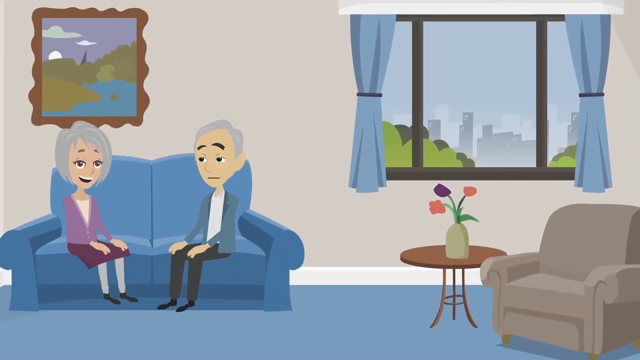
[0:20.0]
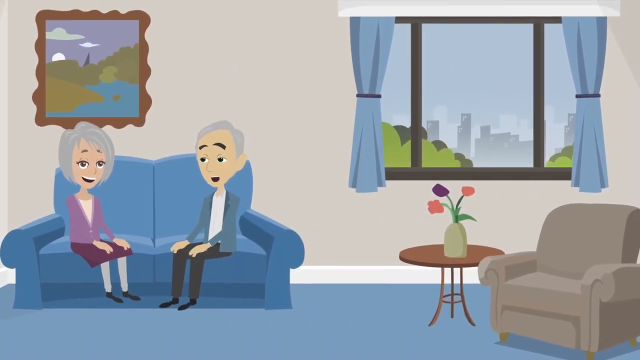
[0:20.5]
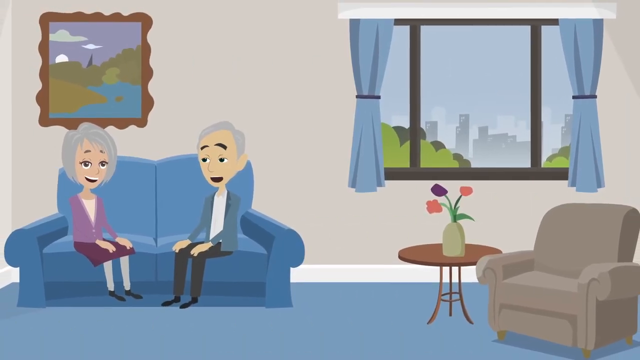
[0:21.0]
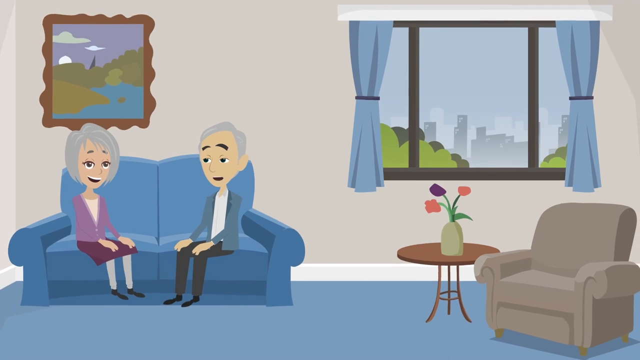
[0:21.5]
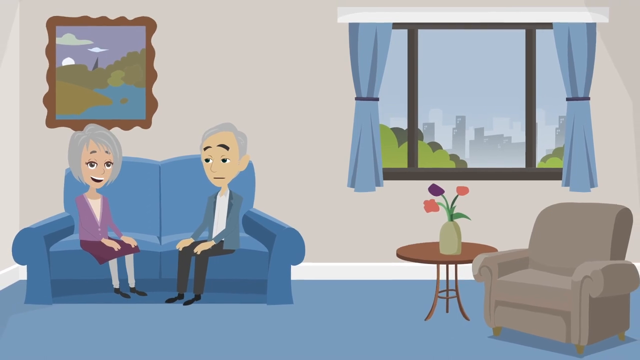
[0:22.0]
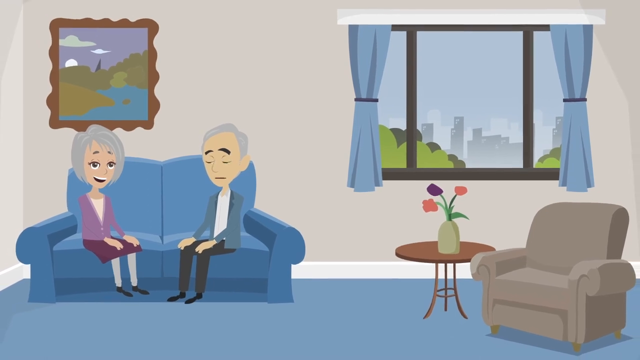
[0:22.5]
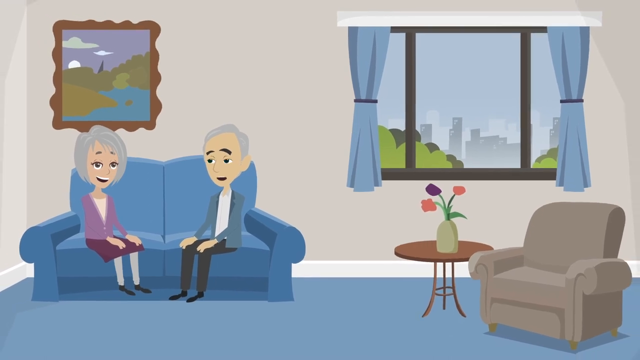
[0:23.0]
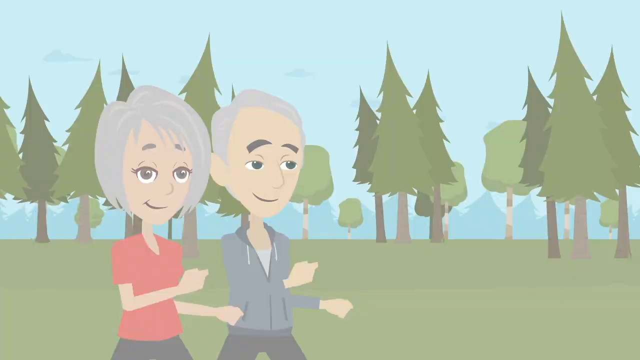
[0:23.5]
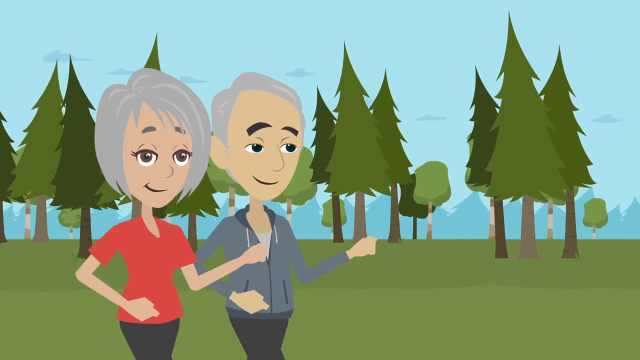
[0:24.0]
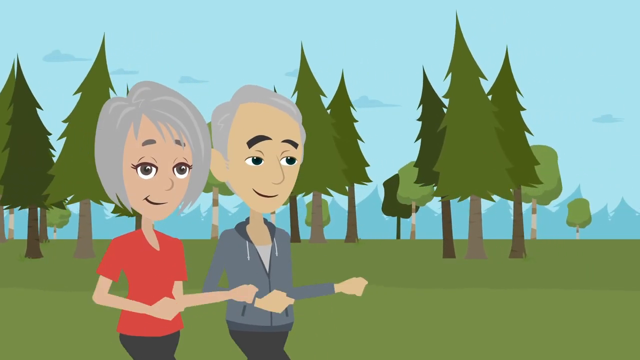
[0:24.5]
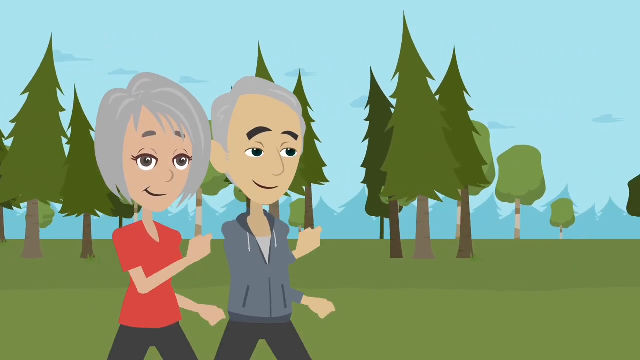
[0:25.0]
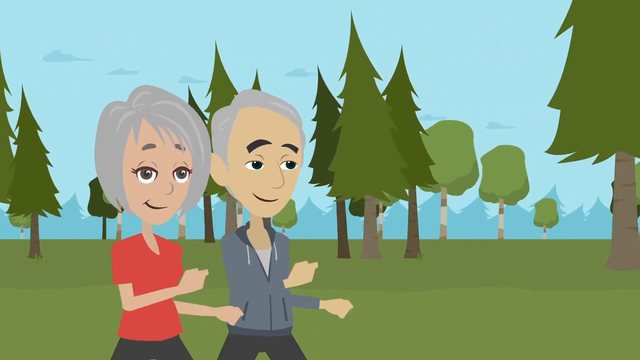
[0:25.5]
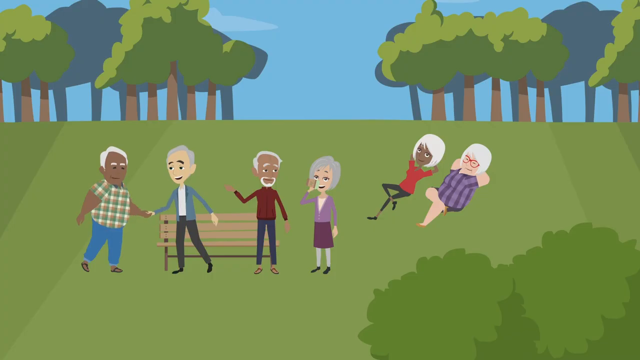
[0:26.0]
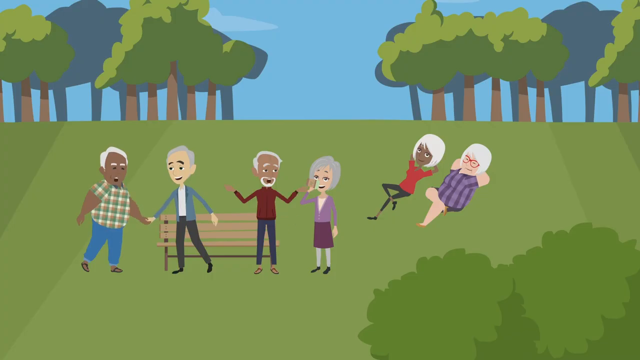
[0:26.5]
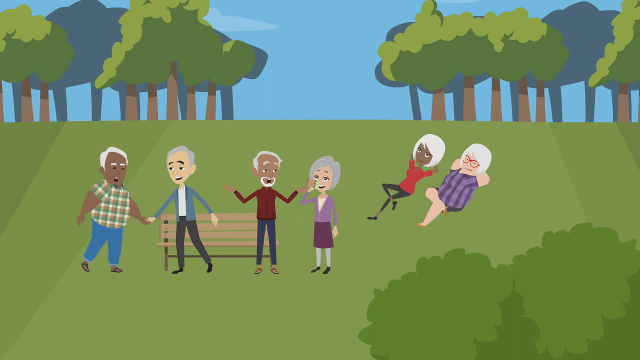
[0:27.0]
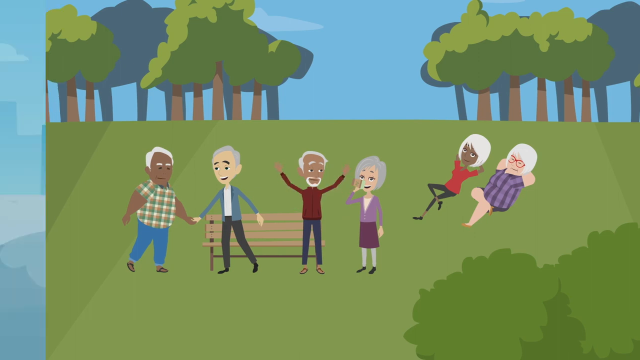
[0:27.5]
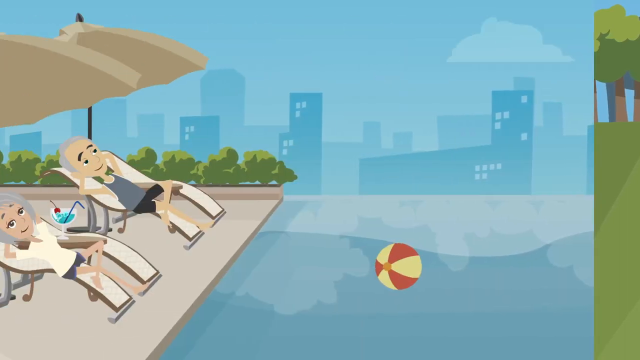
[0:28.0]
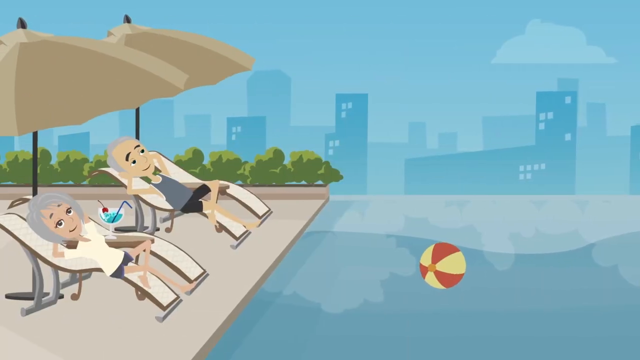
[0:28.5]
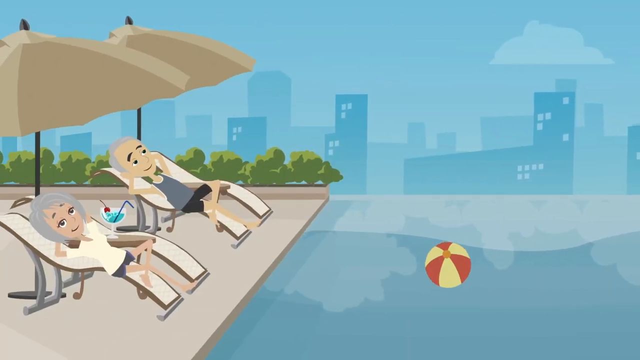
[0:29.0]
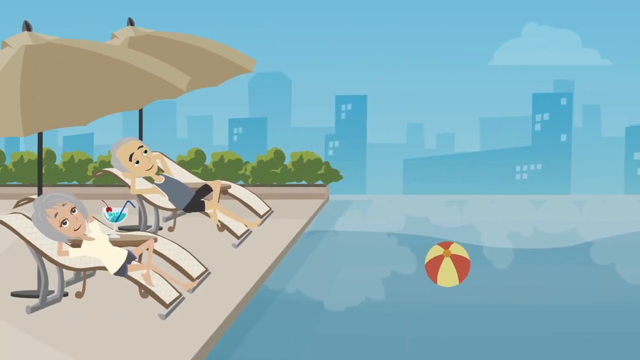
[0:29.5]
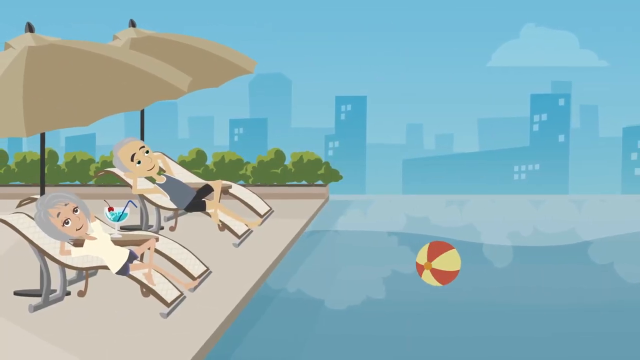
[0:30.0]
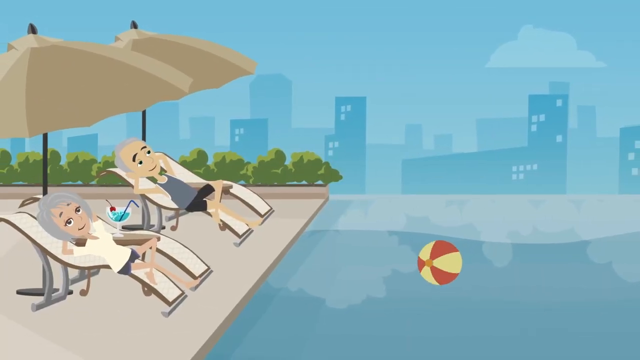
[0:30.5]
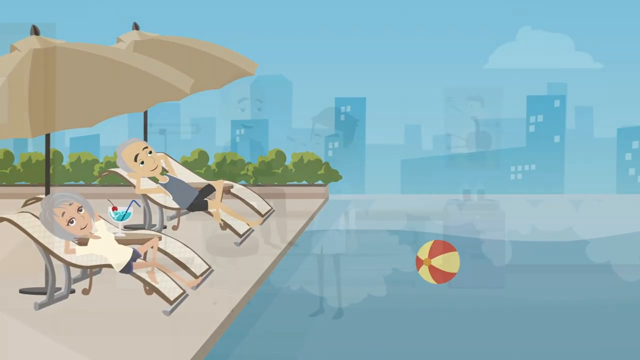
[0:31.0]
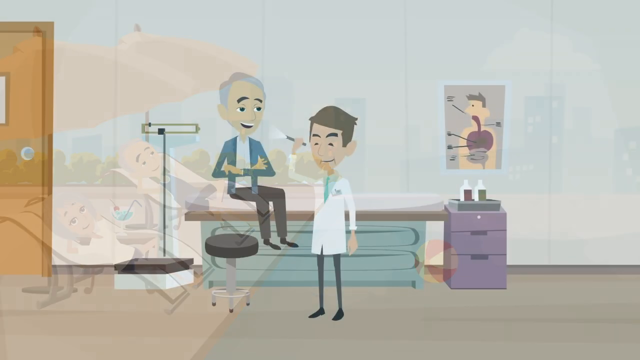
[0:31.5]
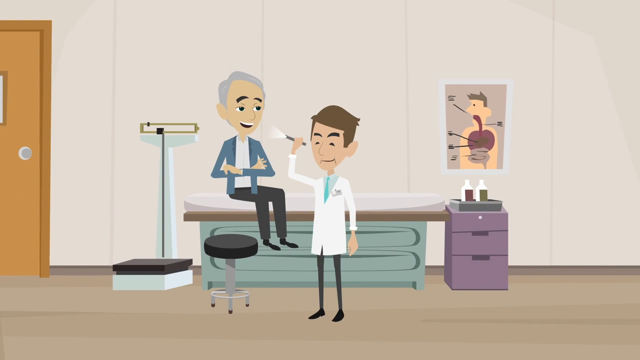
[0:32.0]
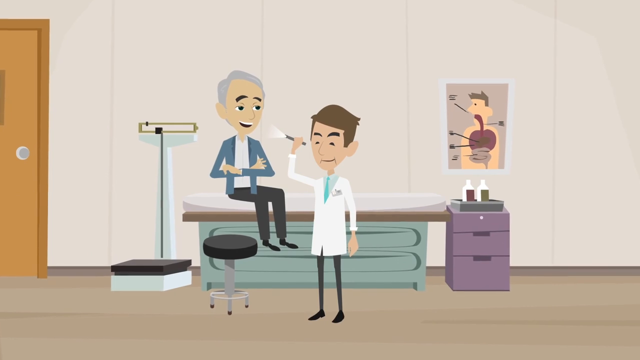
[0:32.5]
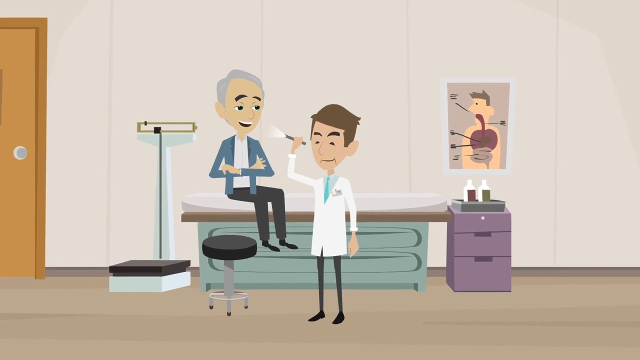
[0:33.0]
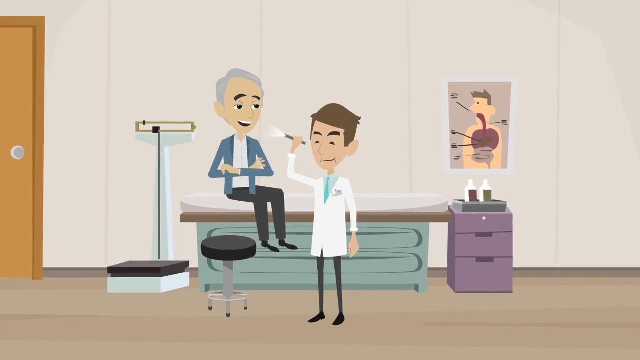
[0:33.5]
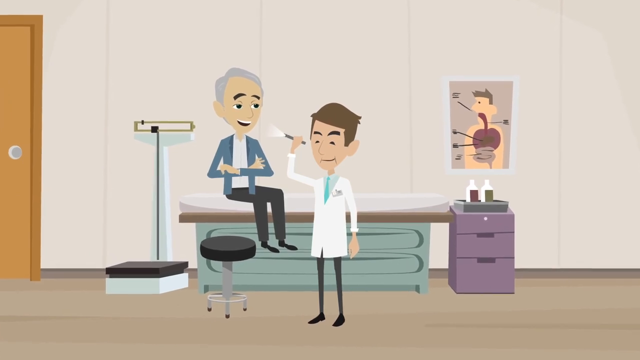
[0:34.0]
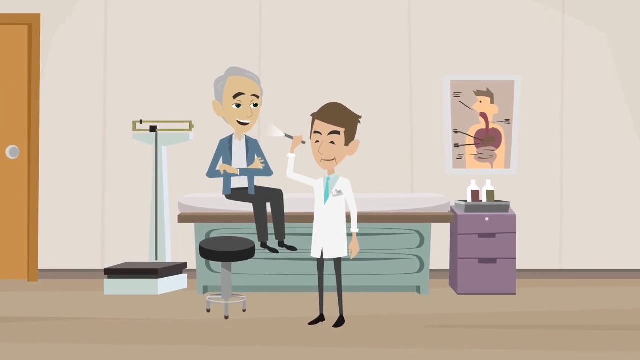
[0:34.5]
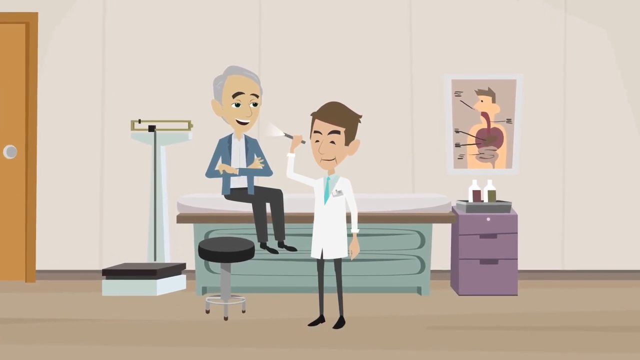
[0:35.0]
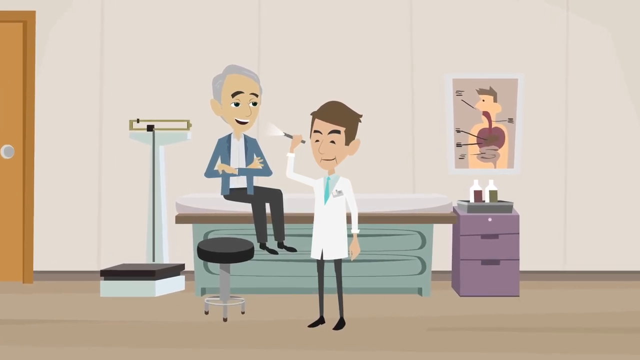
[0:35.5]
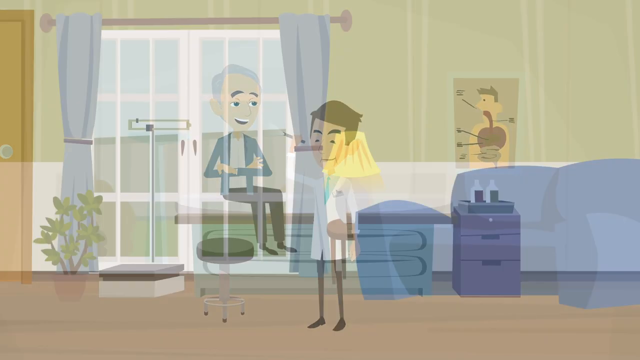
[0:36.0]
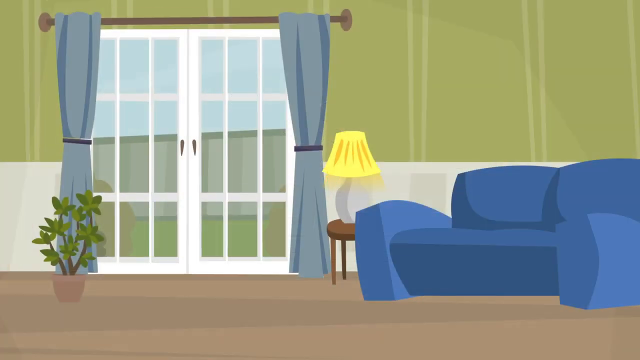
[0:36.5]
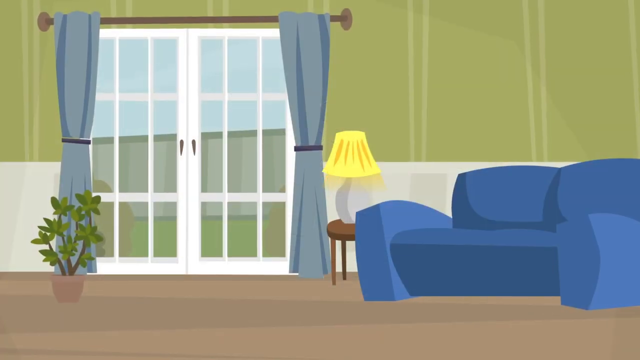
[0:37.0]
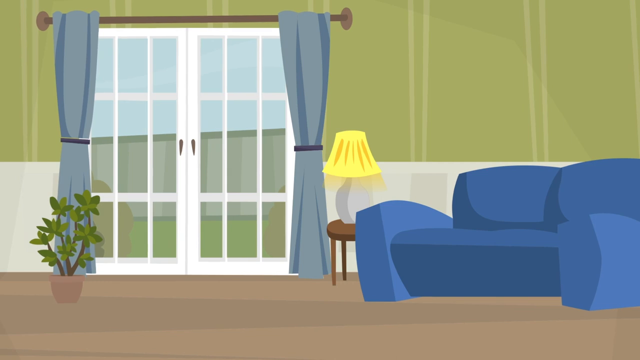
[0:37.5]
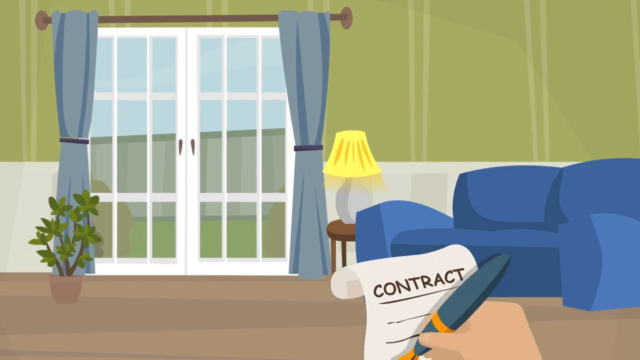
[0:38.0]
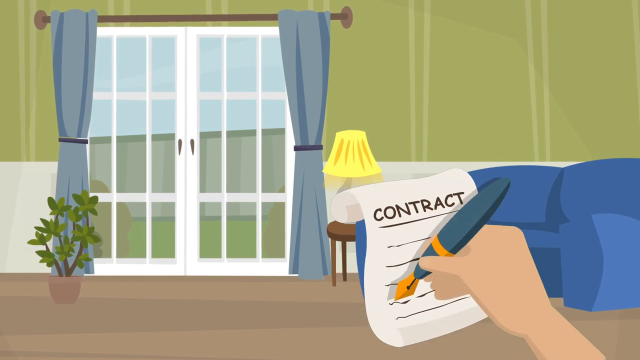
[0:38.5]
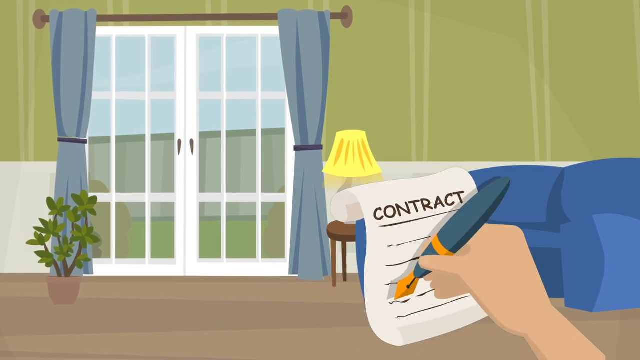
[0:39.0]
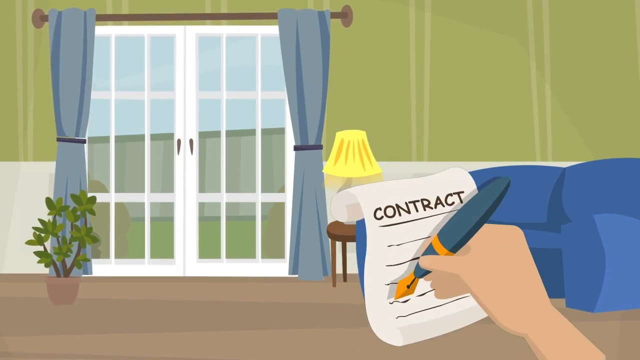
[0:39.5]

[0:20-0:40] The elderly couple sit chatting on a blue sofa in the accommodation, with a painting on the wall behind them. In the next scene they run in a woodland/field setting. They are then shown socialising with other, seemingly elderly, people: chatting, shaking hands, relaxing in the sun and lying down on the grass, with six people in the scene. Next, the elderly couple recline under umbrellas in front of a pool in a city landscape, with a red and yellow beach ball floating in the pool in front of them. The elderly man then gets a health check-up from a medical professional wearing a white coat. Finally, an image shows a piece of paper with "contract" written on it and someone's hand holding a pen, looking as if about to write or sign the contract.